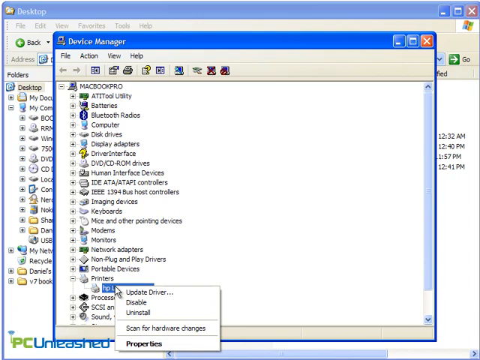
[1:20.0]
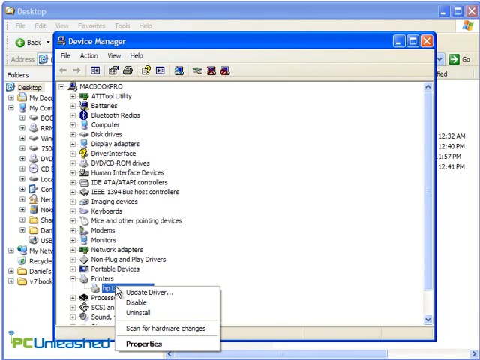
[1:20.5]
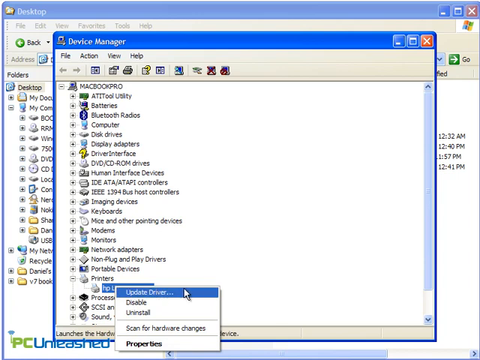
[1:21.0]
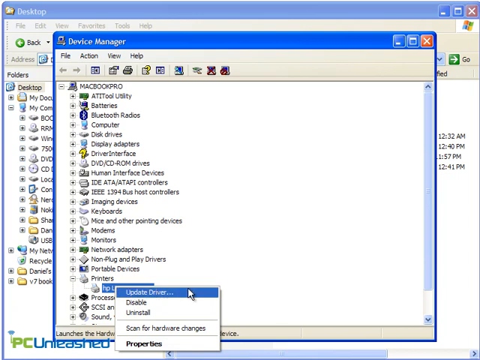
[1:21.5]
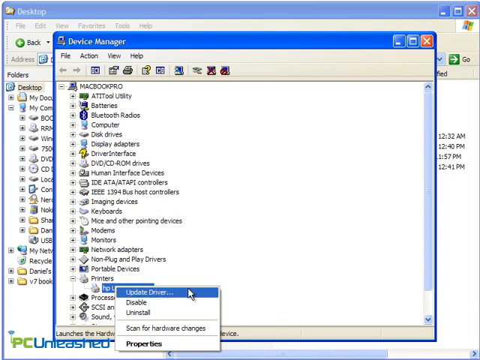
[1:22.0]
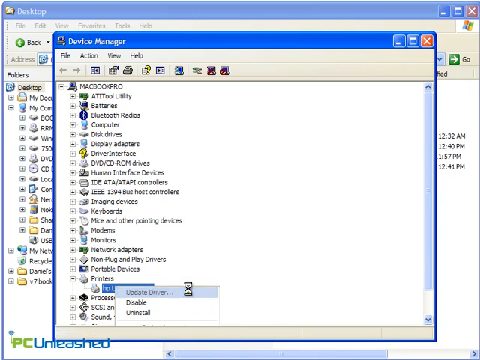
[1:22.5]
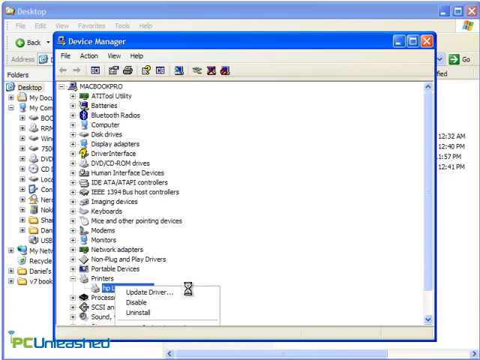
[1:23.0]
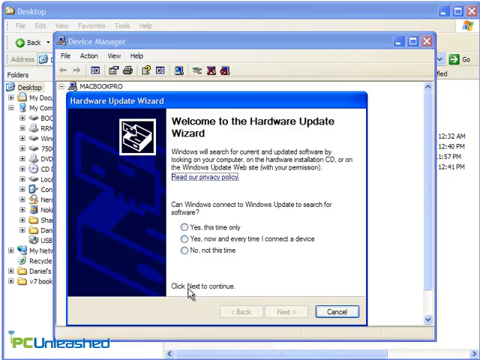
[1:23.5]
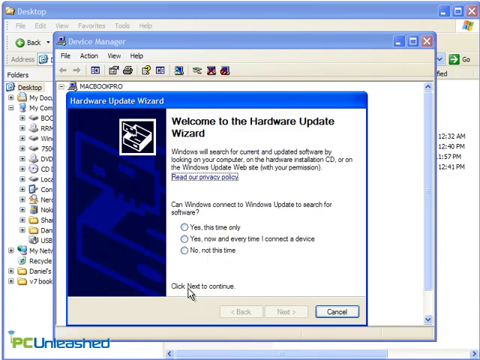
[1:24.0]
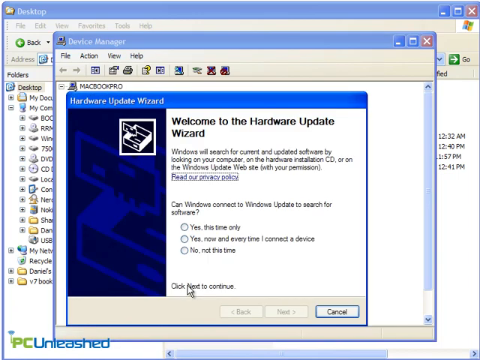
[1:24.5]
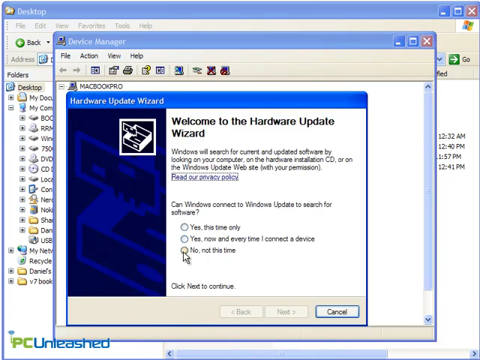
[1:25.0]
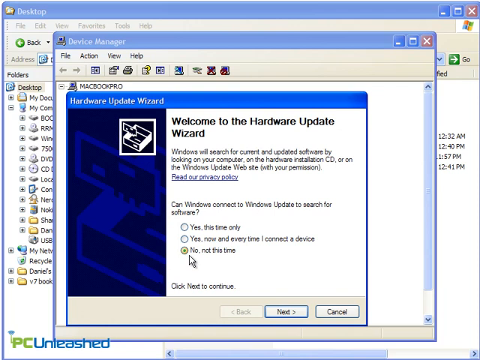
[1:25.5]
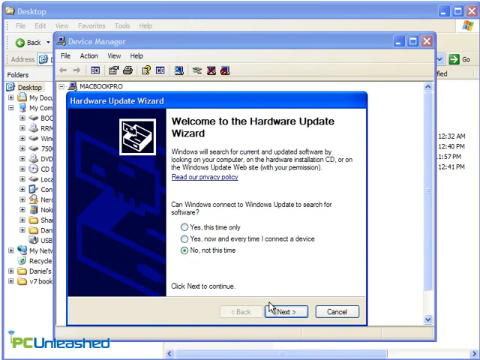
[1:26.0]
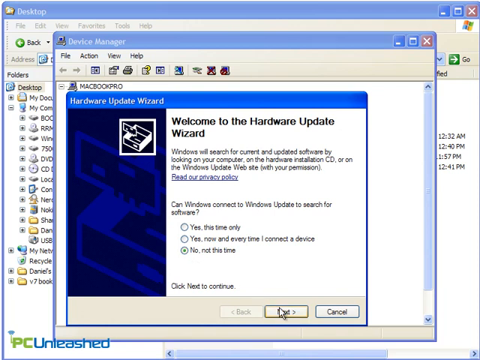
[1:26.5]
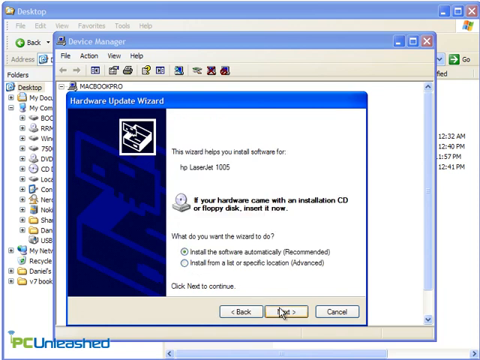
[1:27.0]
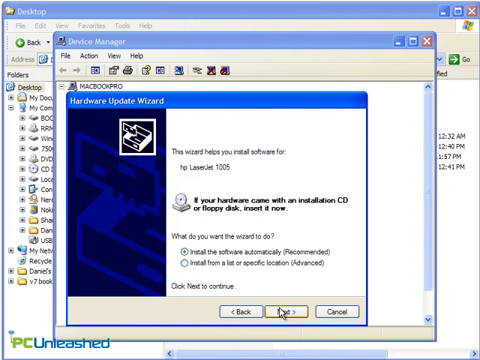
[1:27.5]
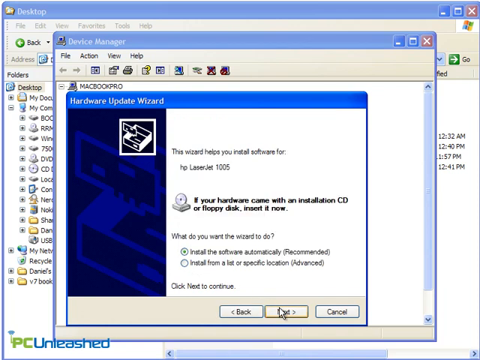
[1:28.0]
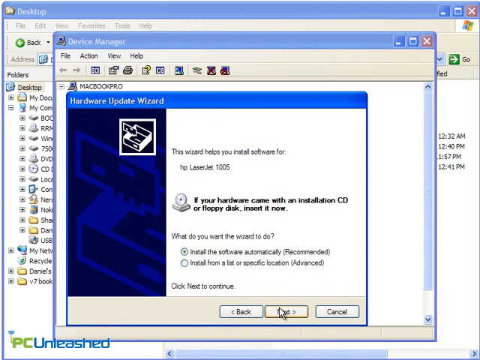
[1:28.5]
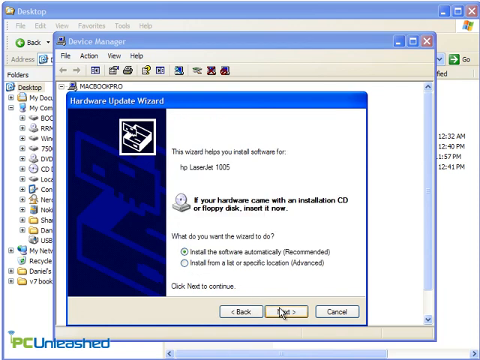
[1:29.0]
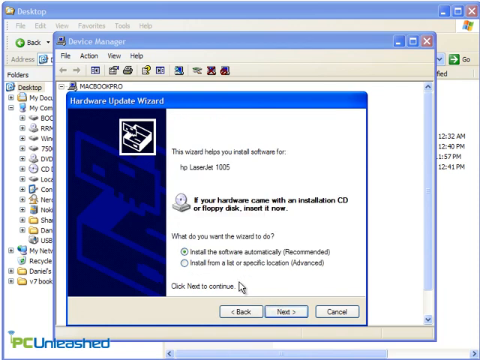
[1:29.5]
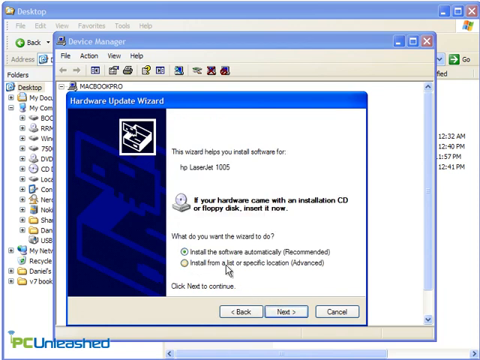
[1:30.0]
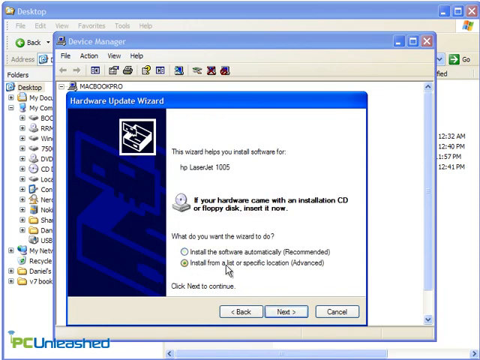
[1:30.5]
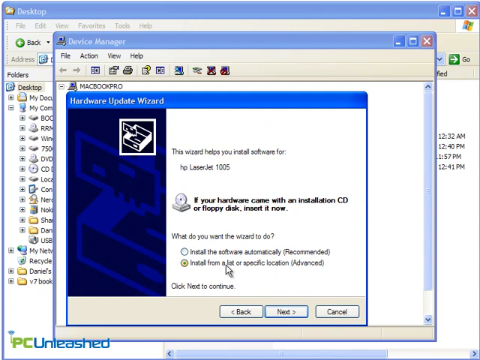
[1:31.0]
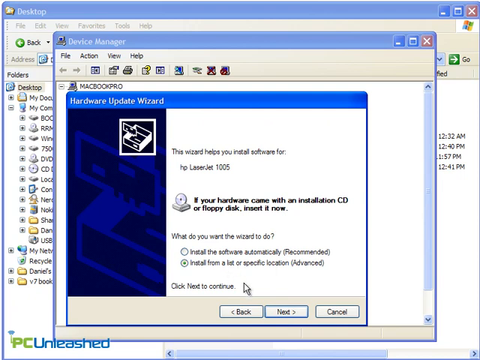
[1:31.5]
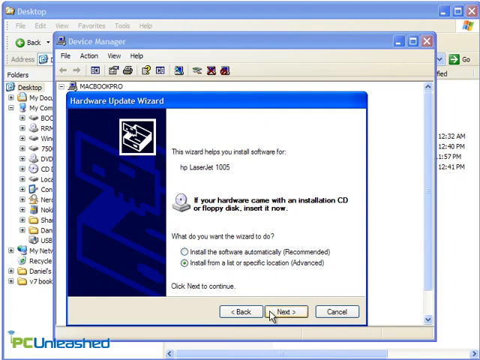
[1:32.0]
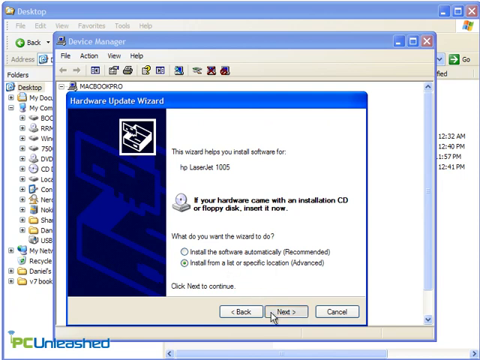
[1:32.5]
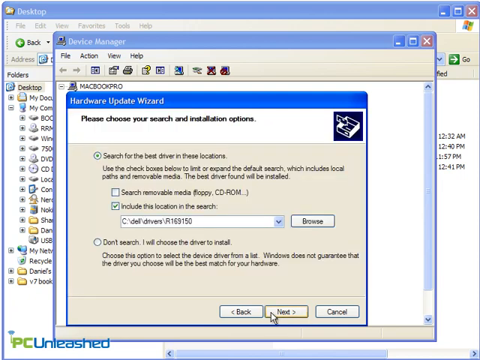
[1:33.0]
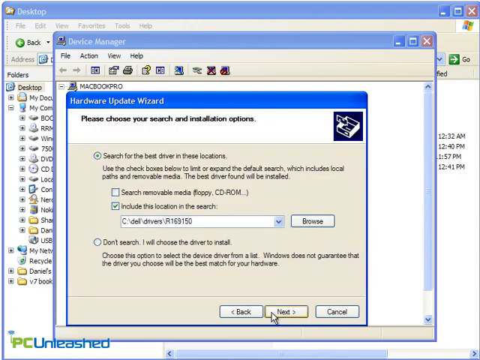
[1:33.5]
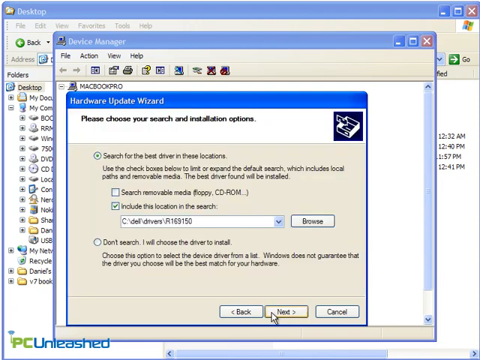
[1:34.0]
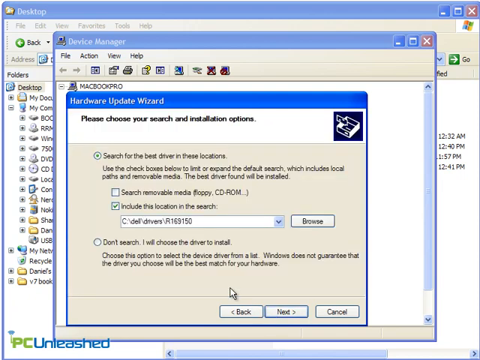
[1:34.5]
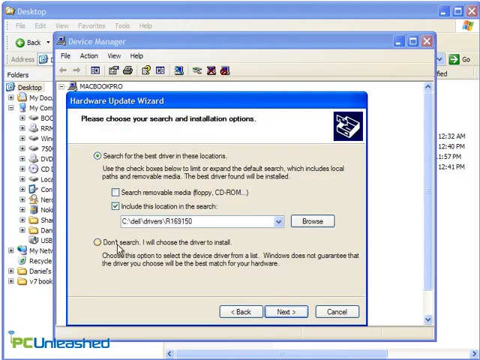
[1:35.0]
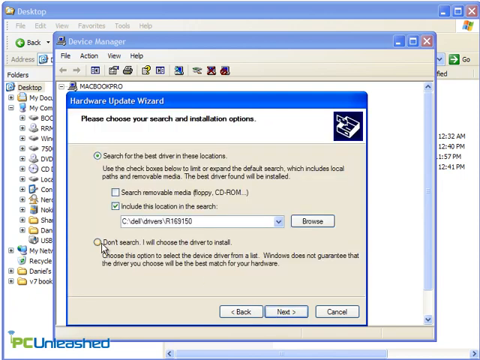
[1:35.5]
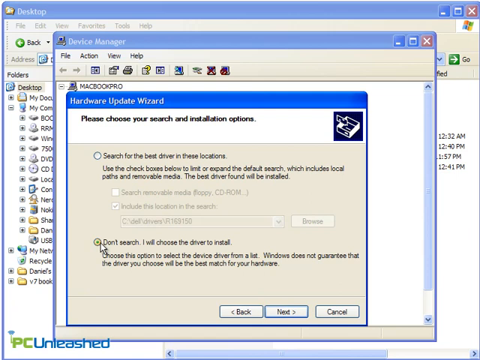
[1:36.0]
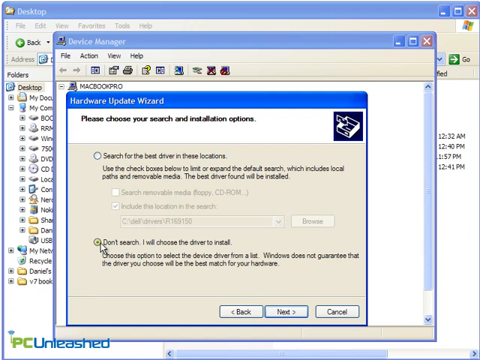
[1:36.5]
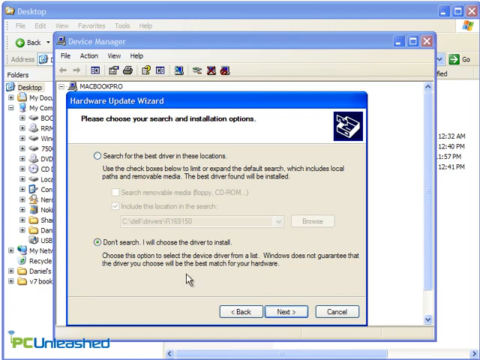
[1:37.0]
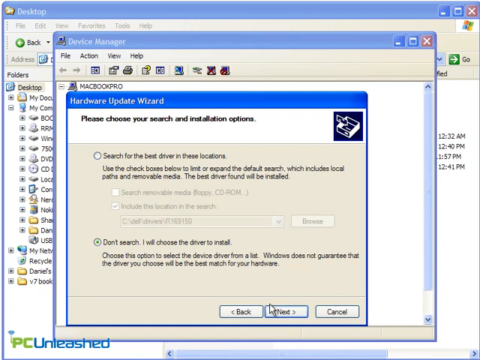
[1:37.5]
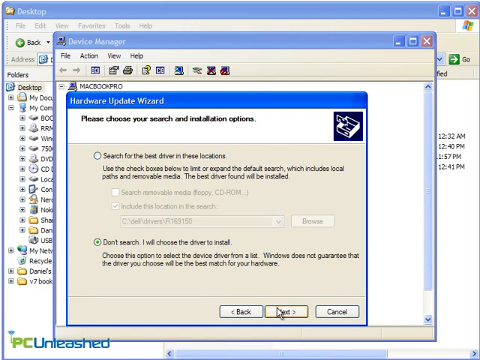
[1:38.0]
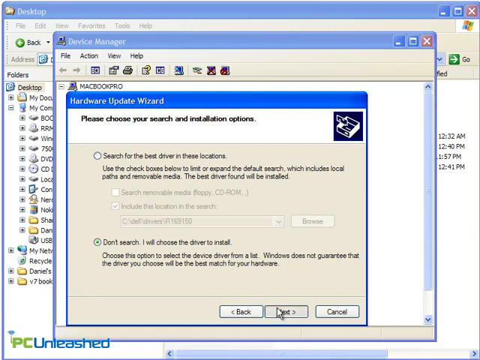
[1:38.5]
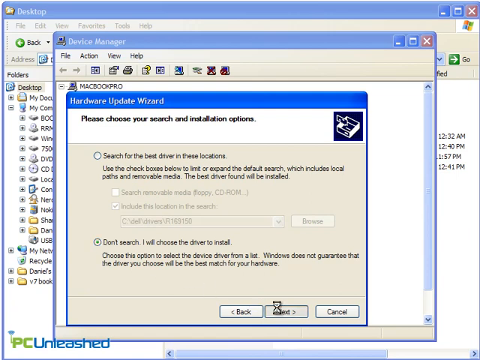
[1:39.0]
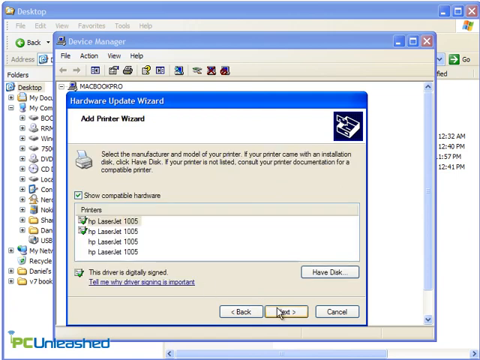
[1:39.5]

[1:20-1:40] Under Printers, the HP LaserJet 1005 is clicked, bringing up options including update, disable, uninstall and scan for hardware changes. Update driver is chosen, opening the Hardware Update Wizard with the text "welcome to the hardware update wizard." It asks whether Windows can connect to Windows Update to search for software, with three options; "no, not this time" is selected and Next is clicked. The wizard states that it helps install software for the HP LaserJet 1005 and asks what the wizard should do, offering to install the software automatically (recommended) or install from a list or specific location. The first, recommended option is chosen and Next is clicked. On the screen asking to choose search and installation options, the option to not search and choose the driver to install is selected instead of searching for the best driver in these locations, and Next is clicked.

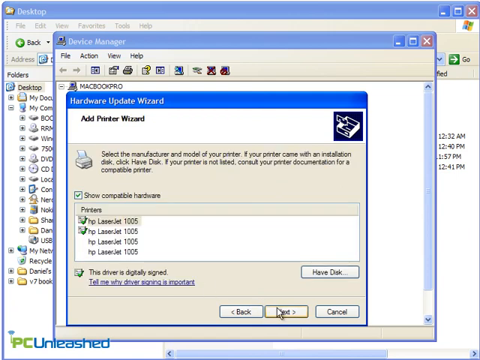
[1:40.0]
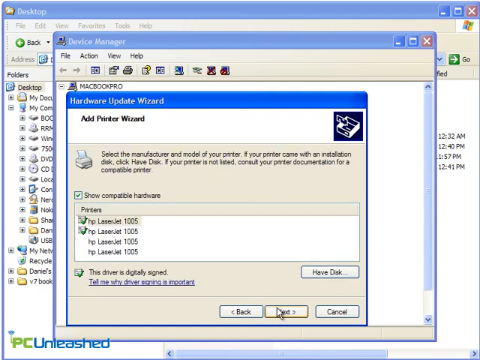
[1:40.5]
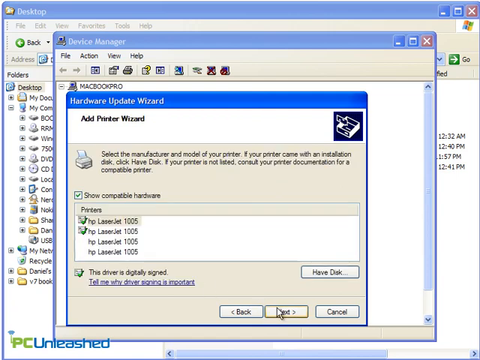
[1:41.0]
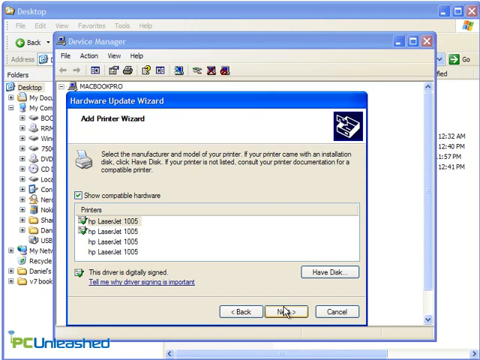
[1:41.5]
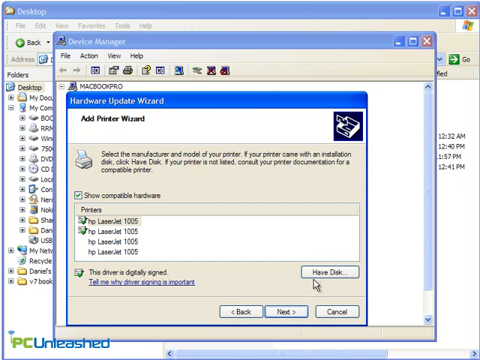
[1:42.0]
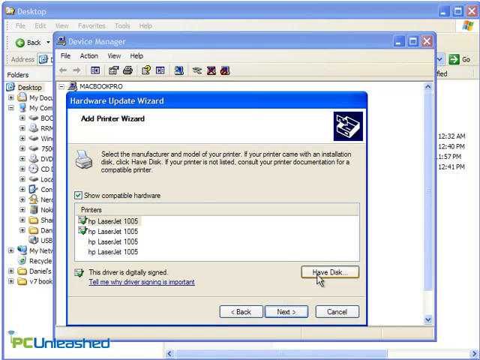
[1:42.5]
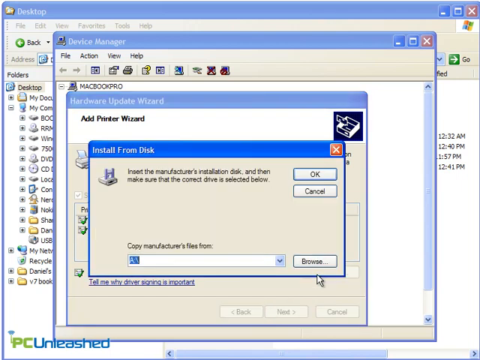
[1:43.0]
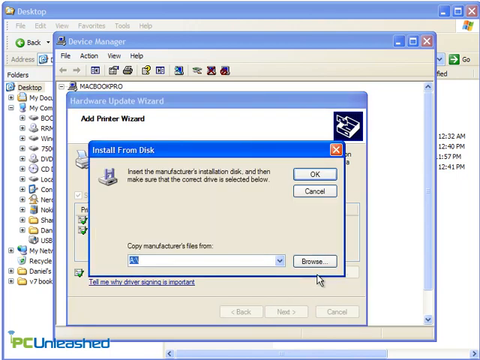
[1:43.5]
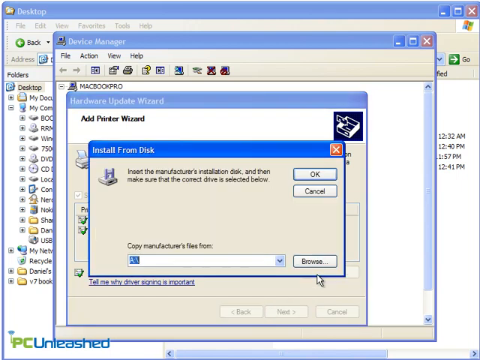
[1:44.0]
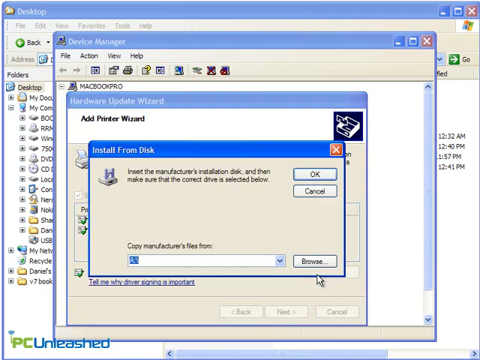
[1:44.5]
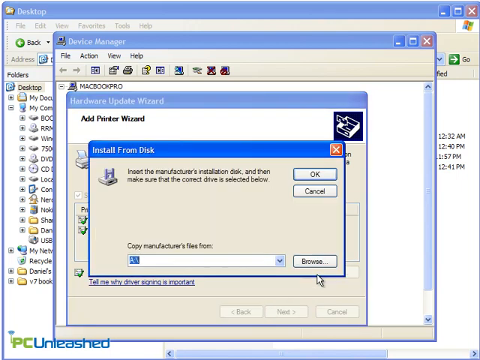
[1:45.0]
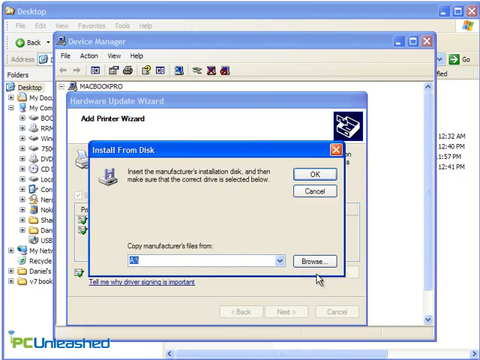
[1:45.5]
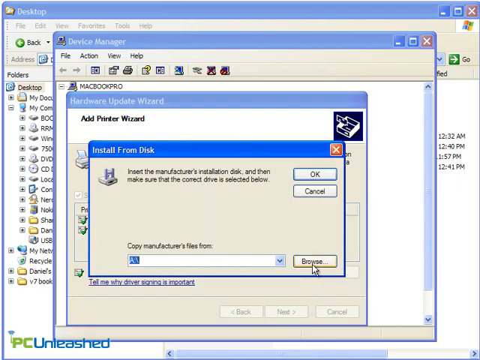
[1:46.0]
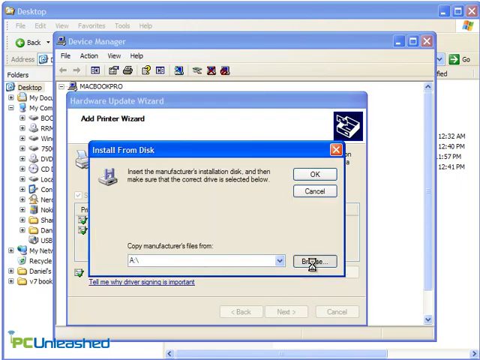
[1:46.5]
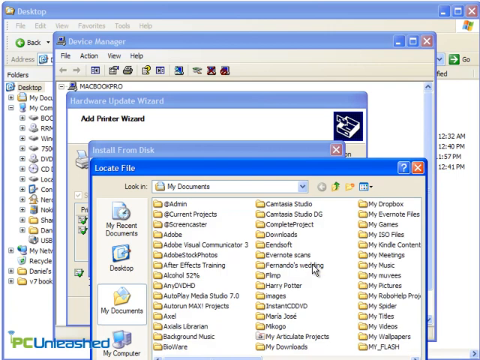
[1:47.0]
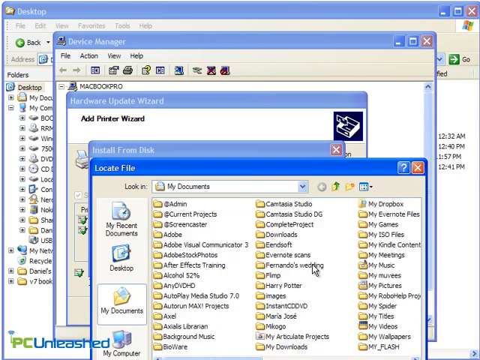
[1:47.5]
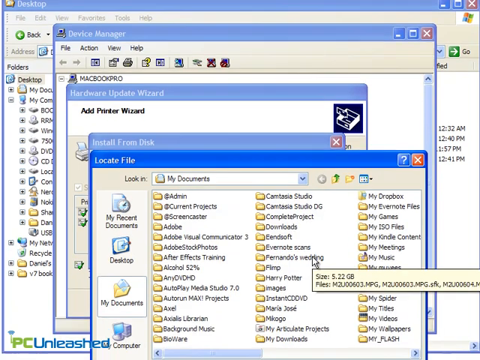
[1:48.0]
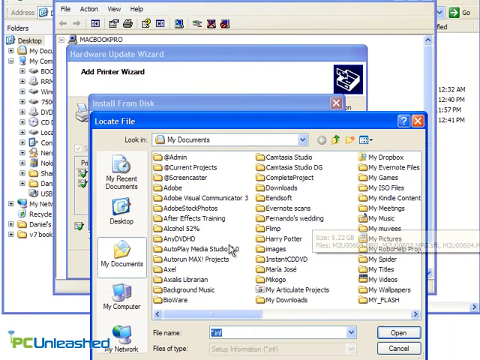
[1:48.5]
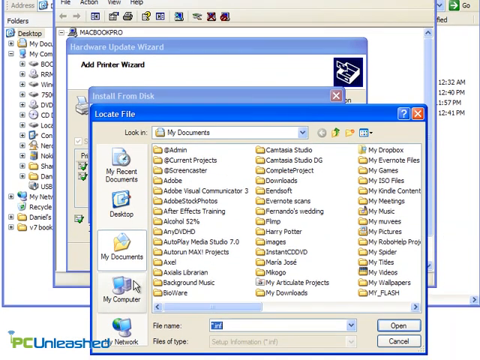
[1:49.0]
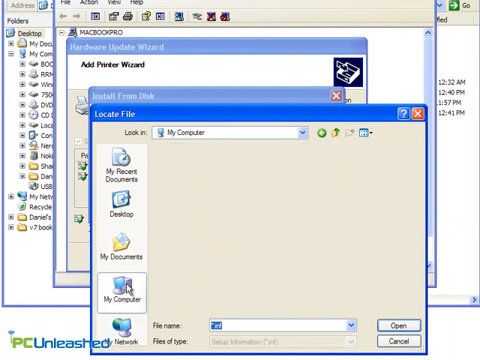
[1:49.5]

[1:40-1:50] Within the Hardware Update Wizard, "show compatible hardware" is clicked, listing four compatible hardware entries. The first one, the HP LaserJet 1005, is chosen. Have Disk is clicked, leading to a prompt to copy manufacturer's files from a location. Browse is used, and My Computer is selected from options including Desktop, My Recent Documents, My Documents and Network. A message asks to insert the manufacturer's installation disk and make sure the correct drive is selected below.